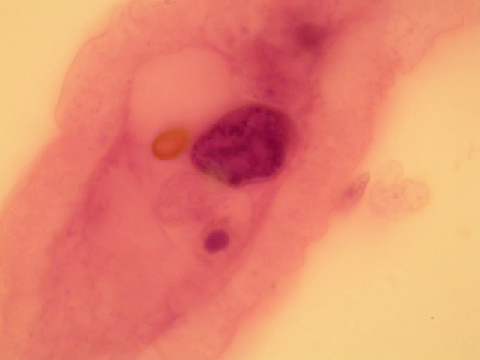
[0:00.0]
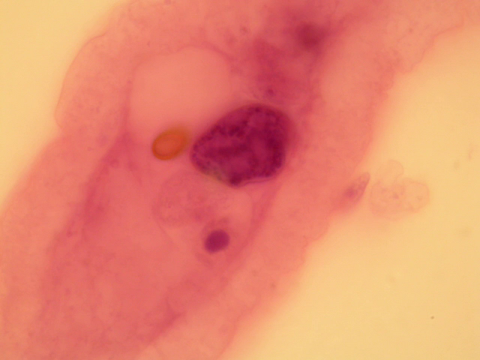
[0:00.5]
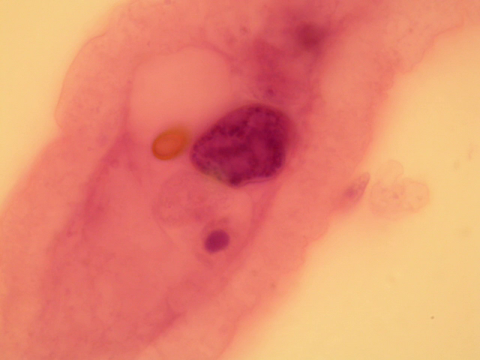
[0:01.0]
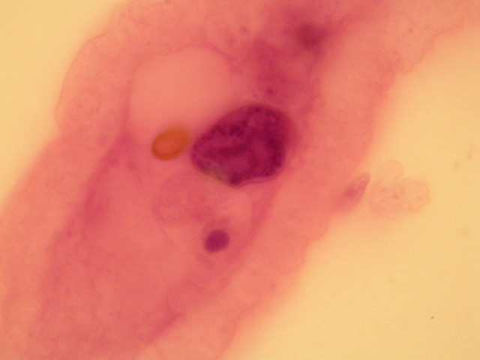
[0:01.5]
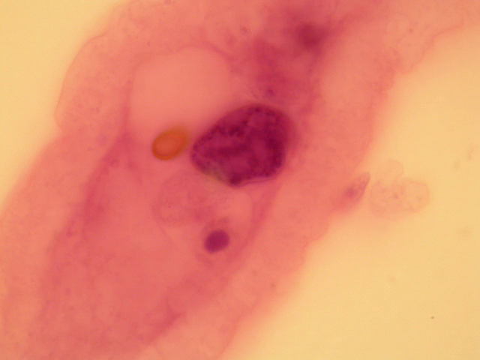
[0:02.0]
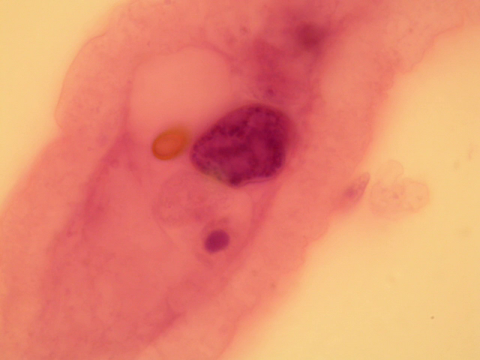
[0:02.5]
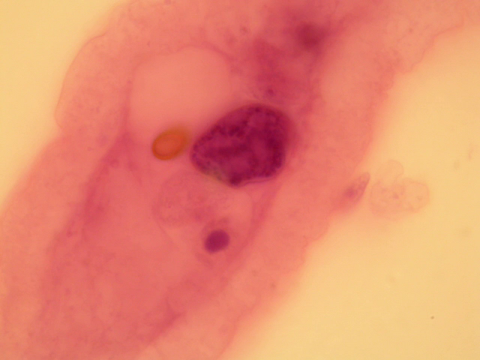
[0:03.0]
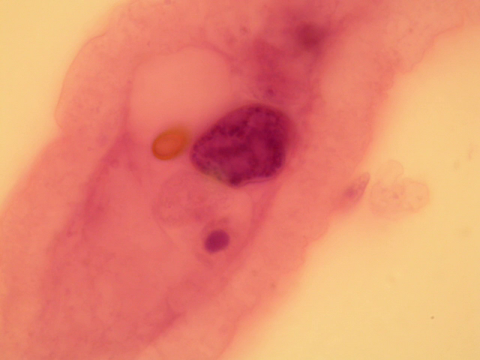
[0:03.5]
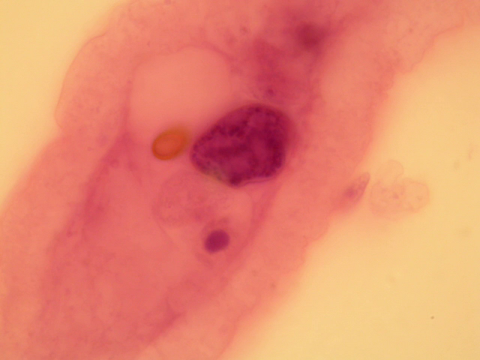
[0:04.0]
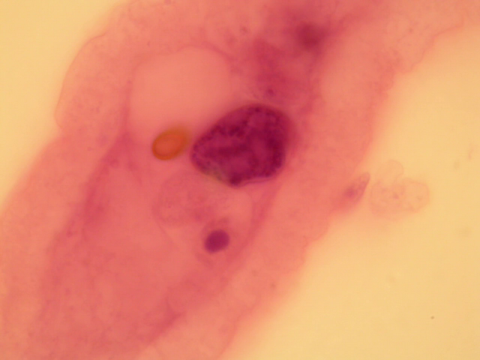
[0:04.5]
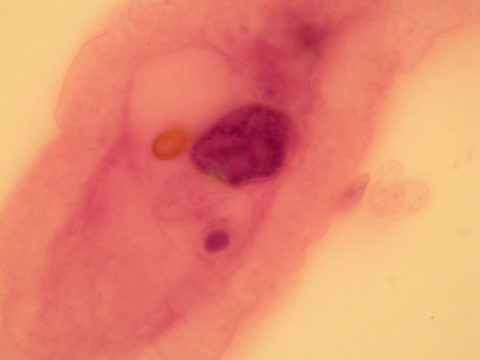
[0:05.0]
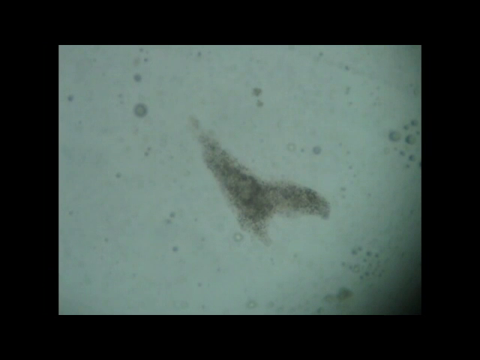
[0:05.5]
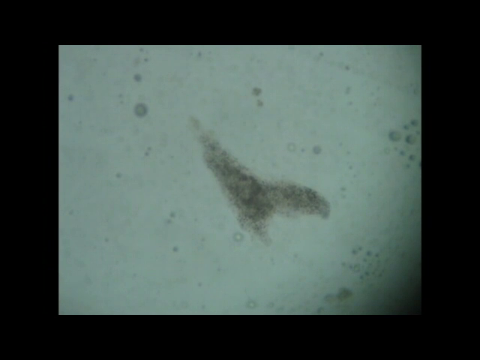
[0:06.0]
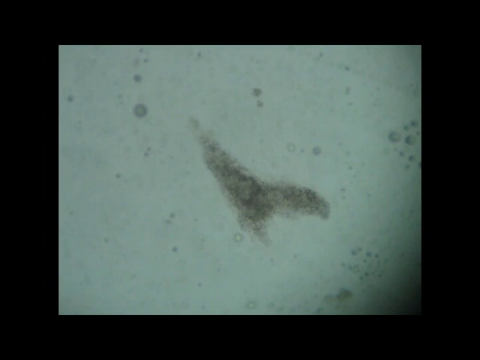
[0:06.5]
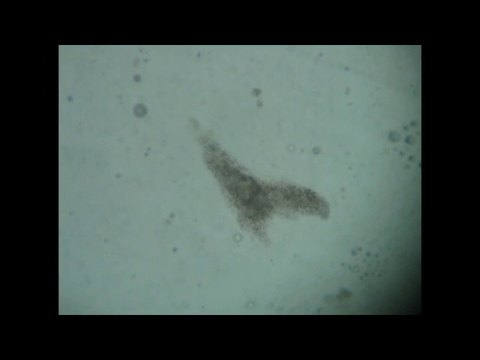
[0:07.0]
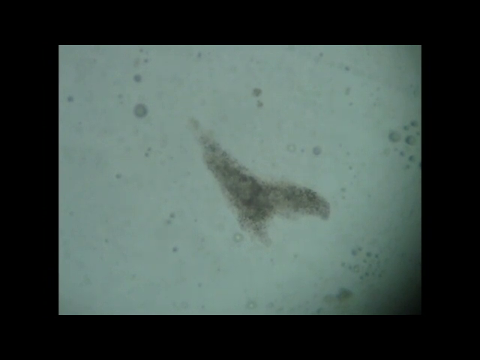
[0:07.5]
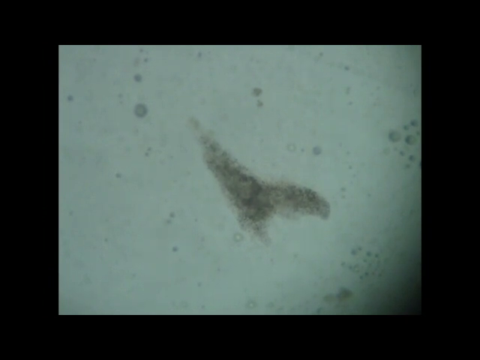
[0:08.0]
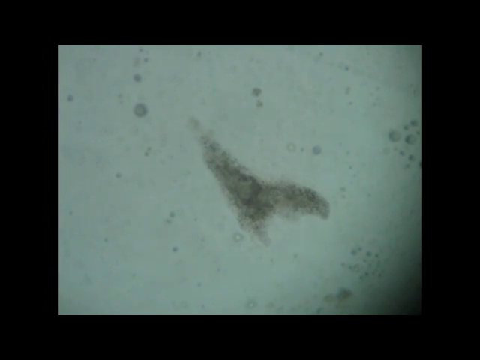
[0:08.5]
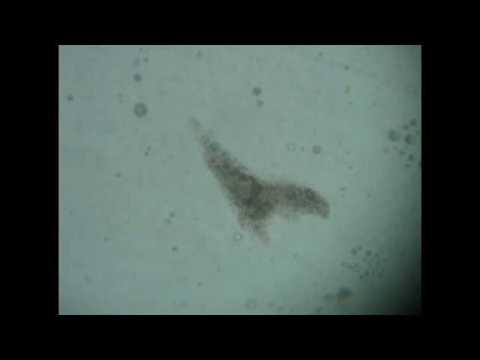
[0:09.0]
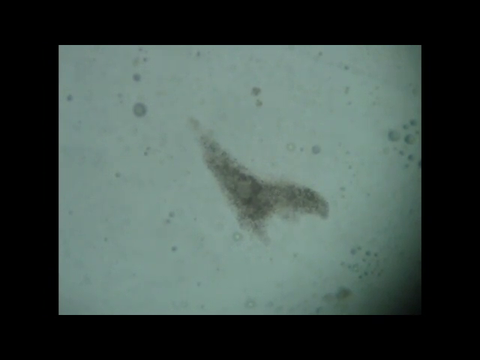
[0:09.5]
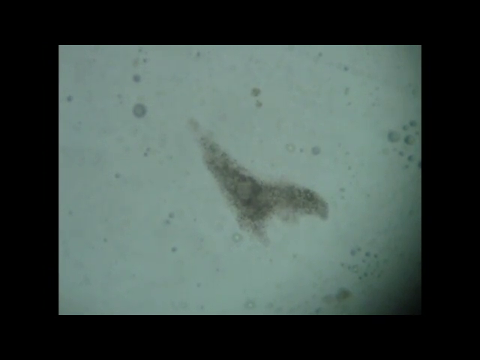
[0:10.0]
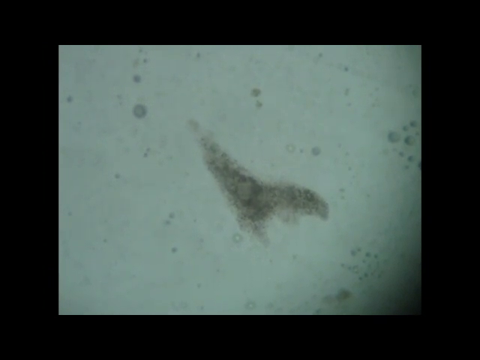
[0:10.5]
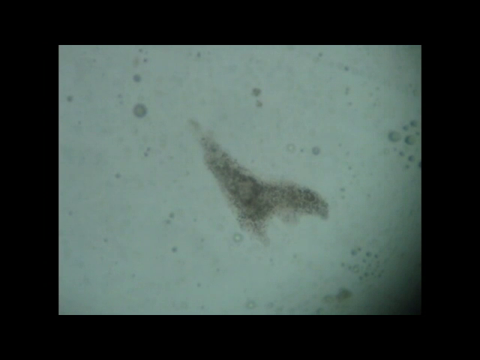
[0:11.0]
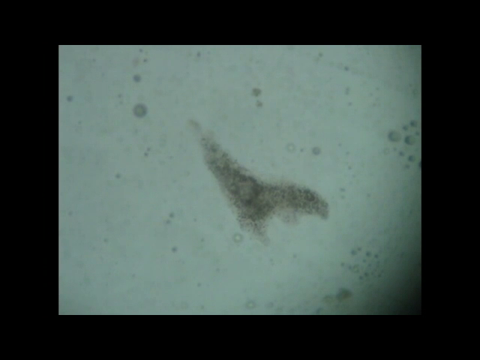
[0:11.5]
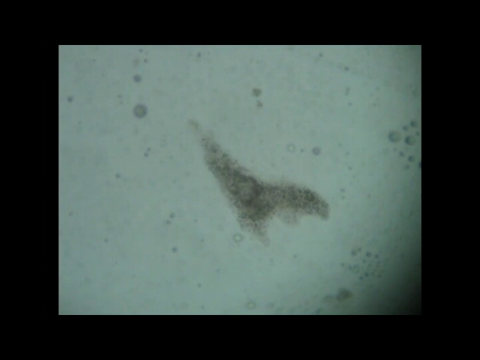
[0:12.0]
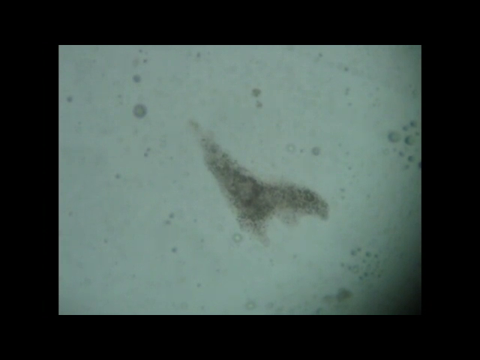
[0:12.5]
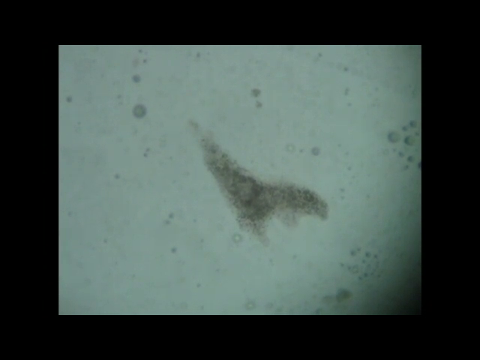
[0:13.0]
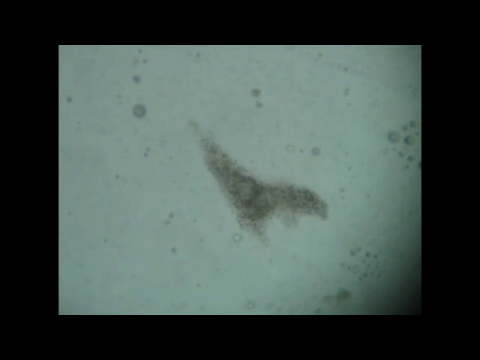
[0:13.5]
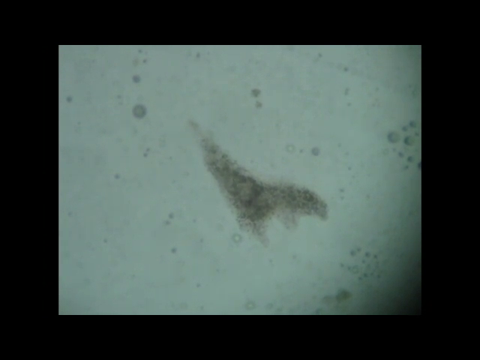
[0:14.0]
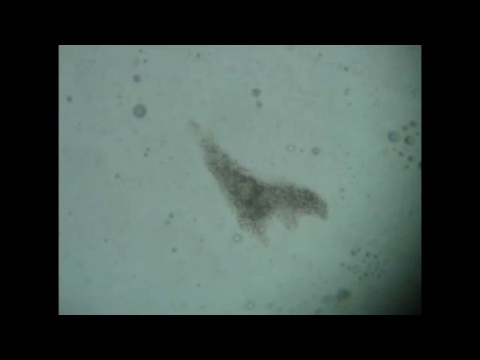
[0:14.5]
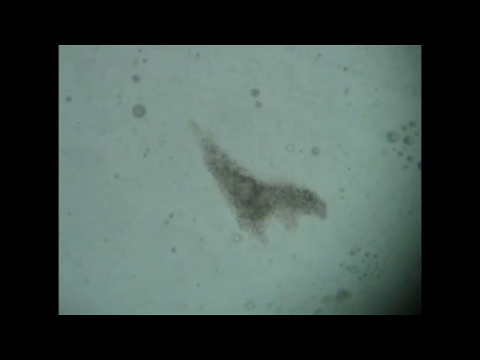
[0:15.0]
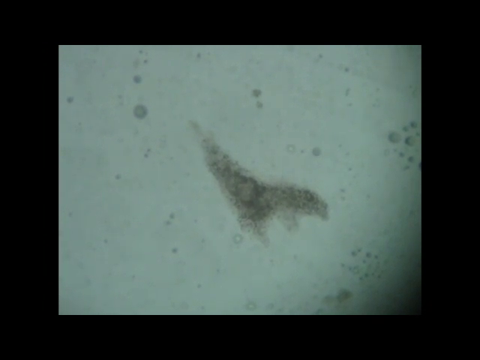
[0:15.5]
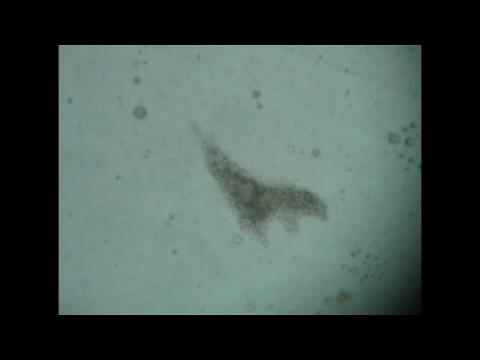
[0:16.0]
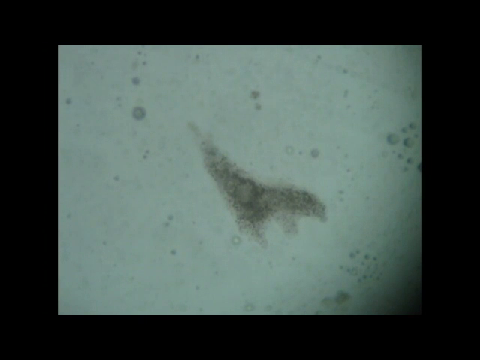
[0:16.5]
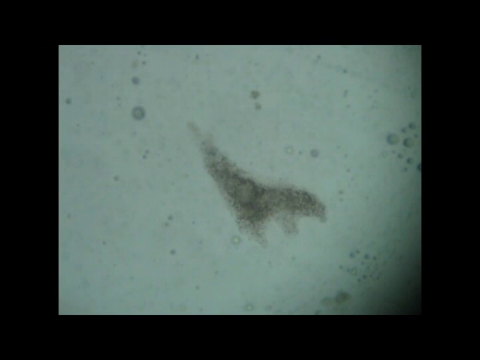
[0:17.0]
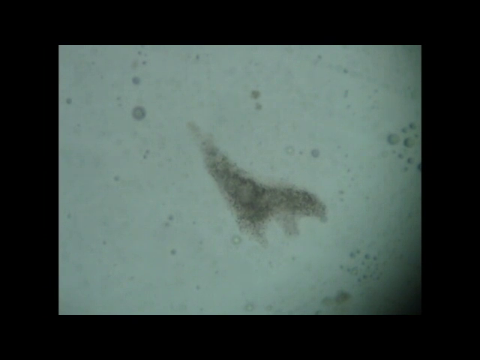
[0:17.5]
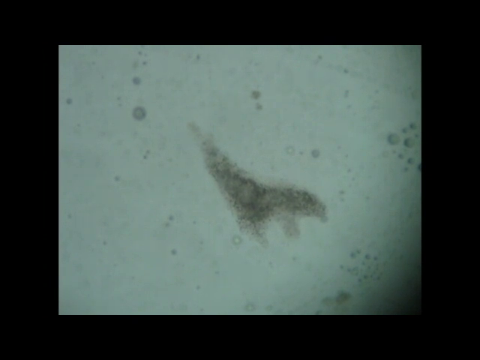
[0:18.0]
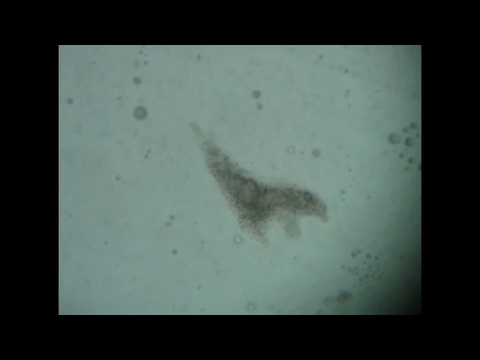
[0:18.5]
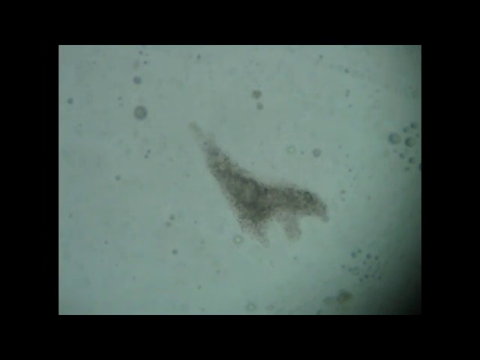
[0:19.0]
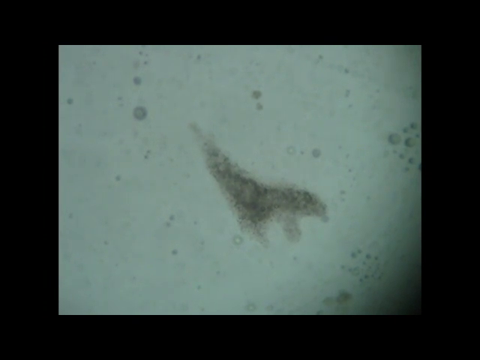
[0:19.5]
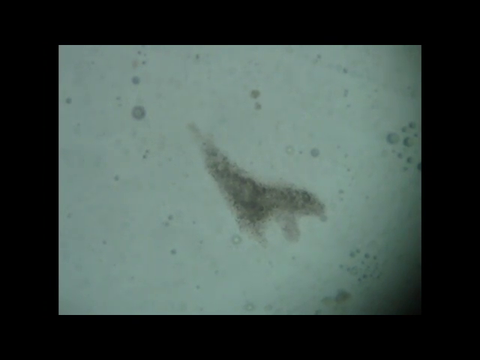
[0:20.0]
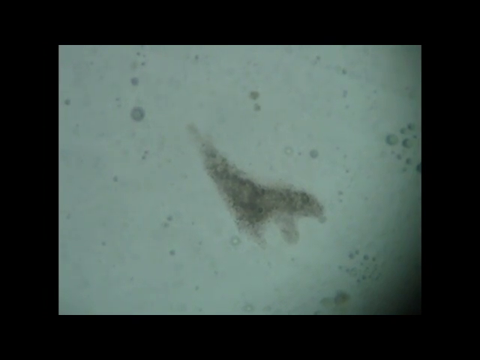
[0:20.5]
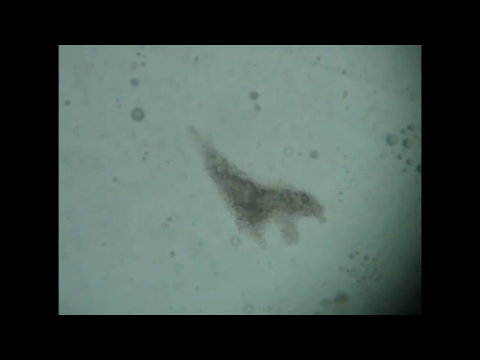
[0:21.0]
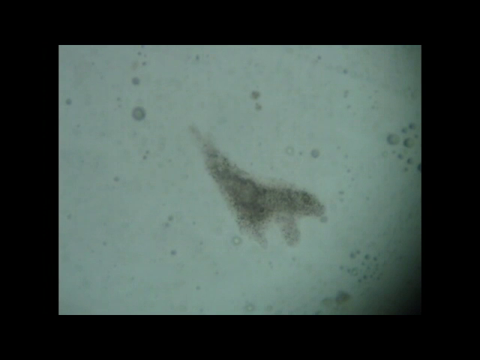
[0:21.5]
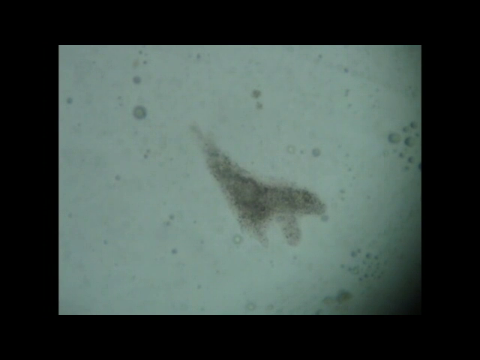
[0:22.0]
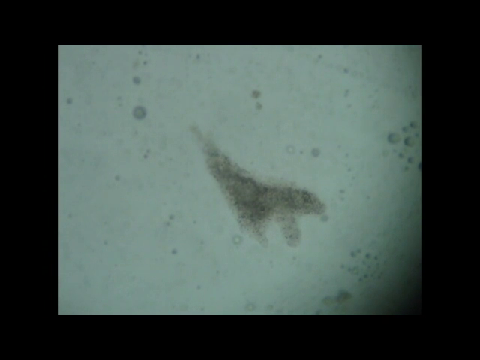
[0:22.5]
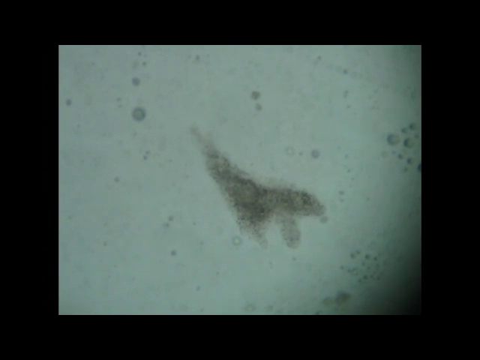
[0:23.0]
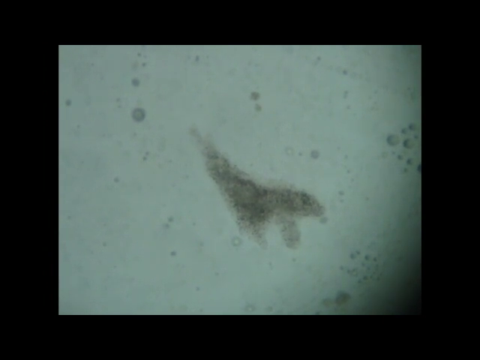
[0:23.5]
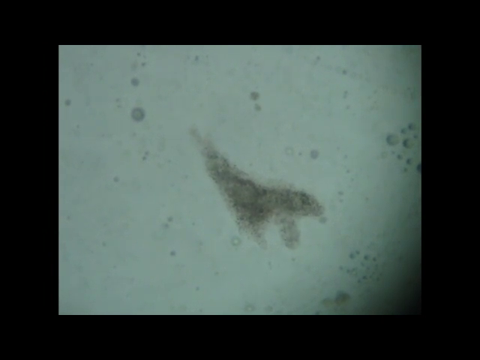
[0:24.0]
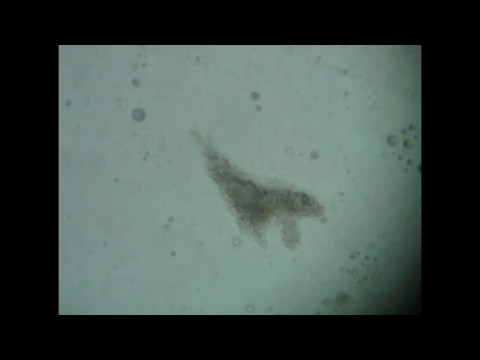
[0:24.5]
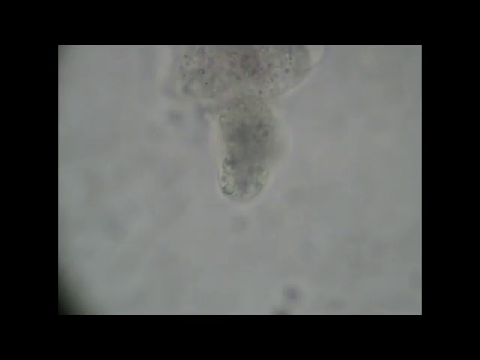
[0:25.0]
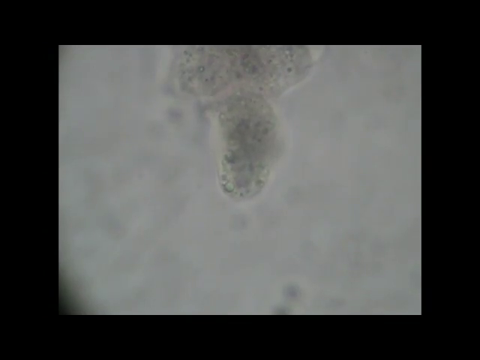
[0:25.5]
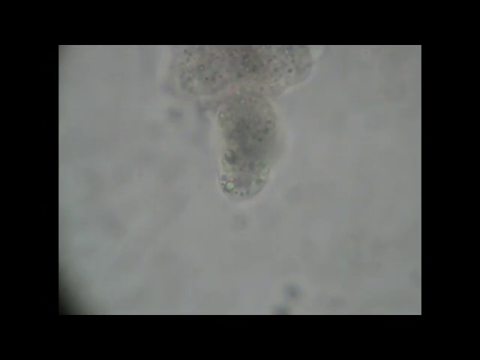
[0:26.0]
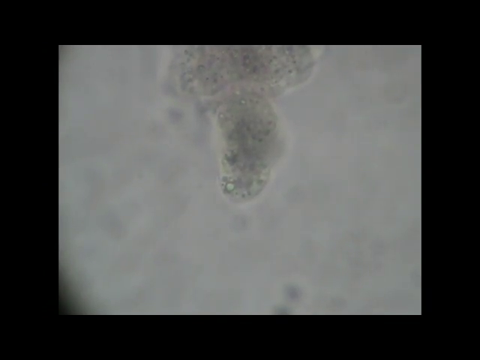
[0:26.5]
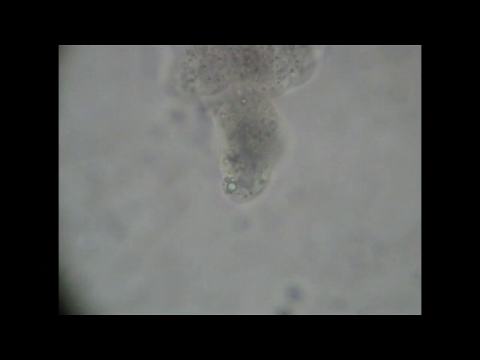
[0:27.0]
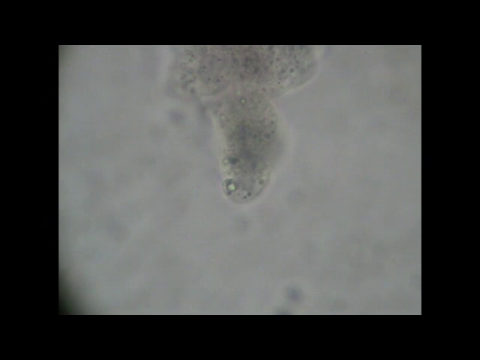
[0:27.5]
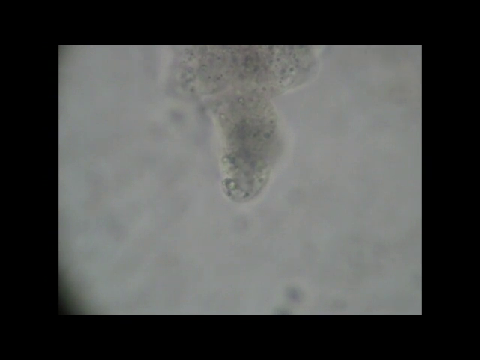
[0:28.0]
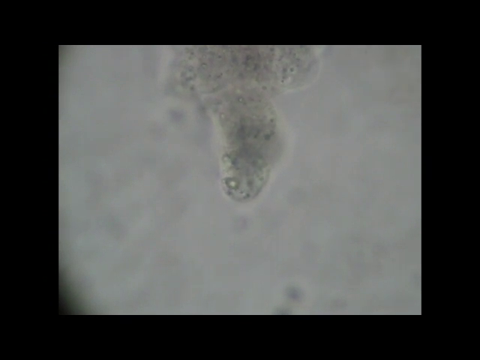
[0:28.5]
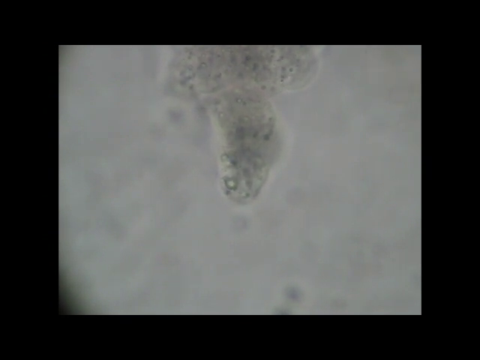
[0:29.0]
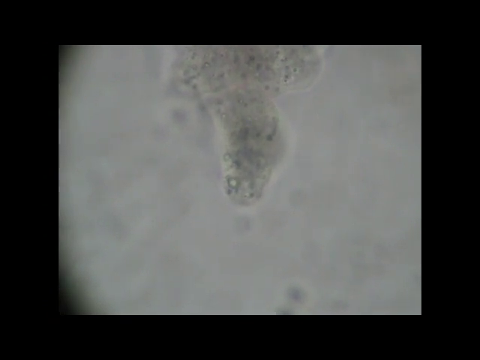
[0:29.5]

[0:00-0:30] The video opens on an image of a cluster of cells that look reddish pink overall. There appears to be one medium cell in the center of the screen that is red. To its left is what looks like another small cell of some sort that is orange-ish, and below the central cell is another cell of a similar reddish color. It is unclear whether the red is the cells' own color or perhaps a dye used to show the cells and their parts more clearly. These cells are either contained in another larger cell or in liquid, and the view looks like a cell cluster seen through a microscope. Next comes a very short shot of what look like more small cells, as if under a microscope: in the center is an irregularly shaped dark mass, surrounded by smaller objects that are either cells or perhaps air bubbles. In the last shot, a cluster of cells sits in the center of the view, again looking like a recording through a microscope. The cells seem to be moving further down, so they are perhaps in some sort of liquid.